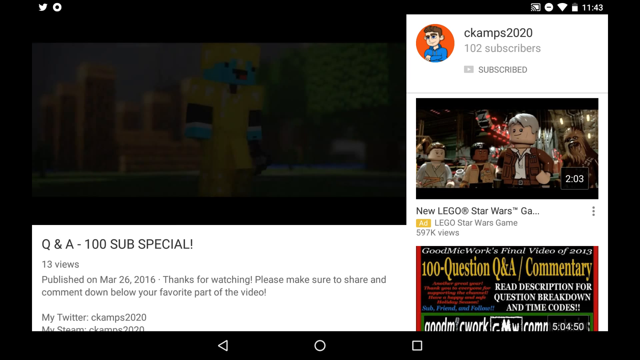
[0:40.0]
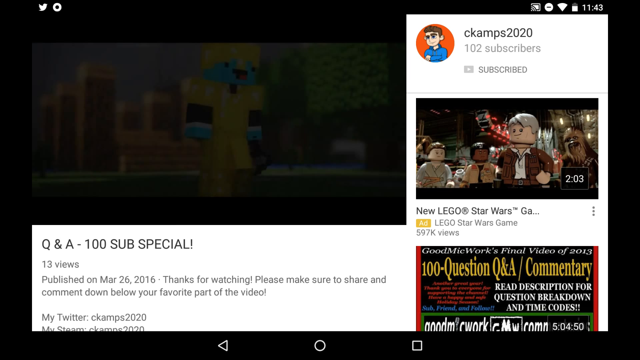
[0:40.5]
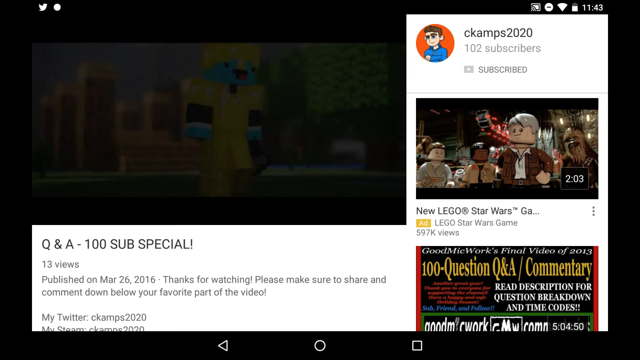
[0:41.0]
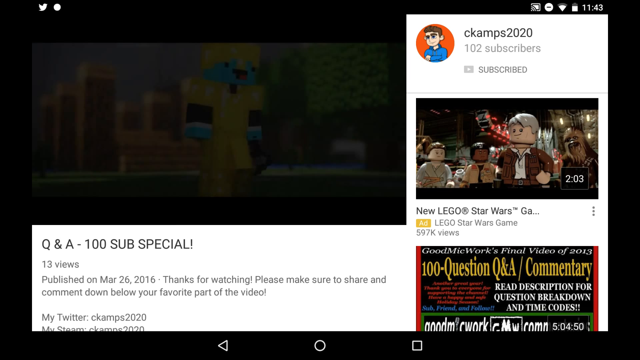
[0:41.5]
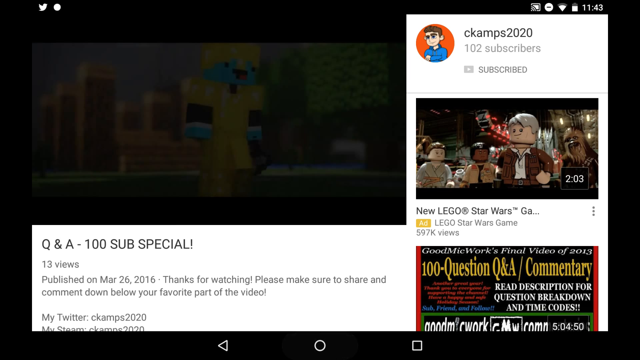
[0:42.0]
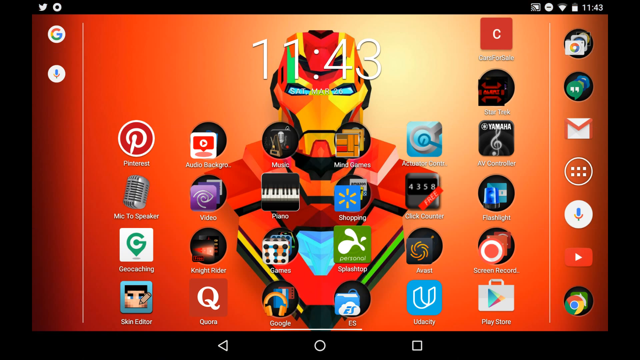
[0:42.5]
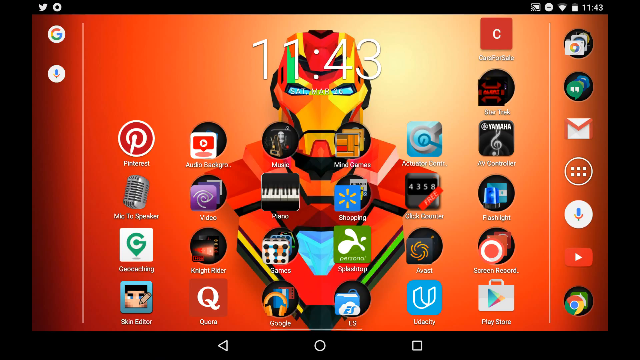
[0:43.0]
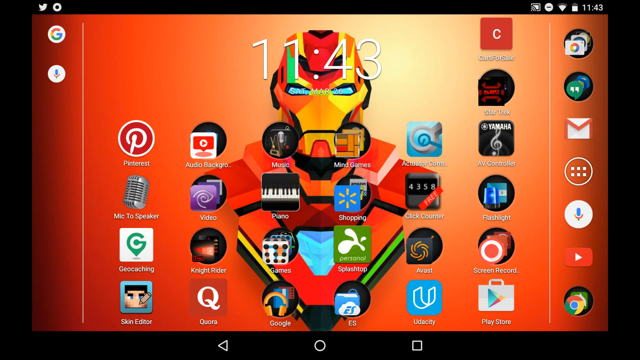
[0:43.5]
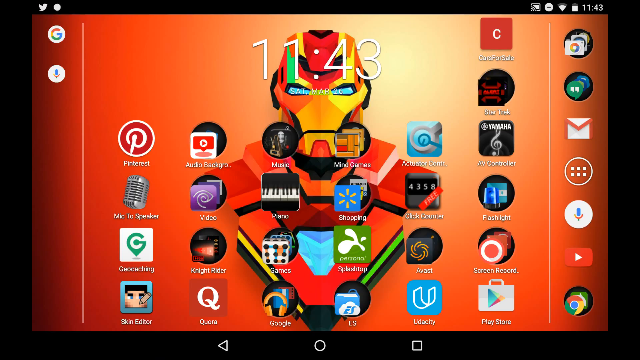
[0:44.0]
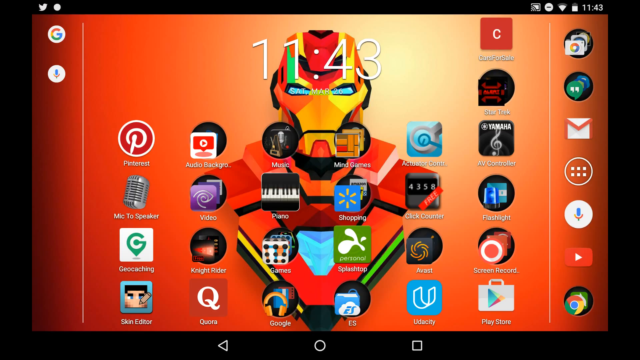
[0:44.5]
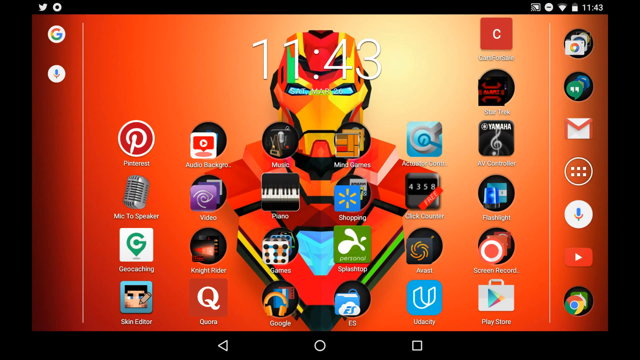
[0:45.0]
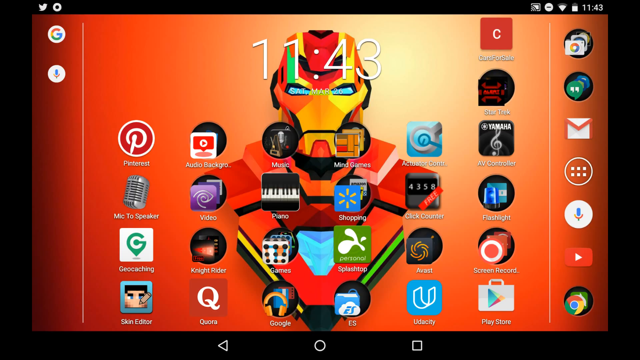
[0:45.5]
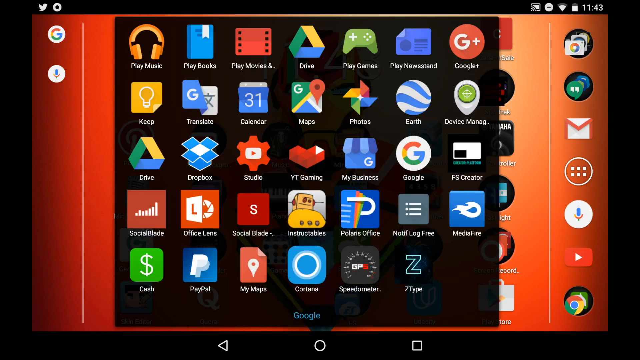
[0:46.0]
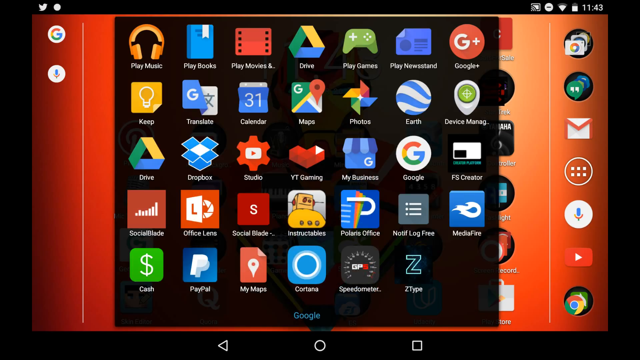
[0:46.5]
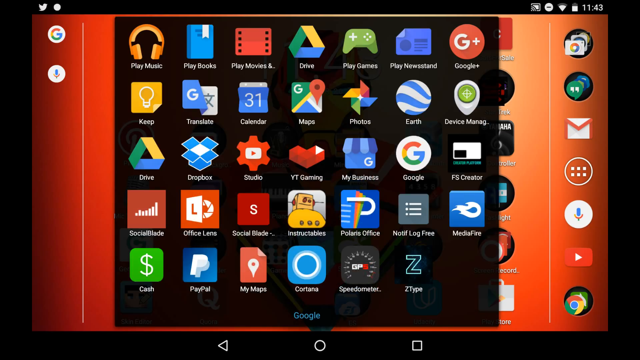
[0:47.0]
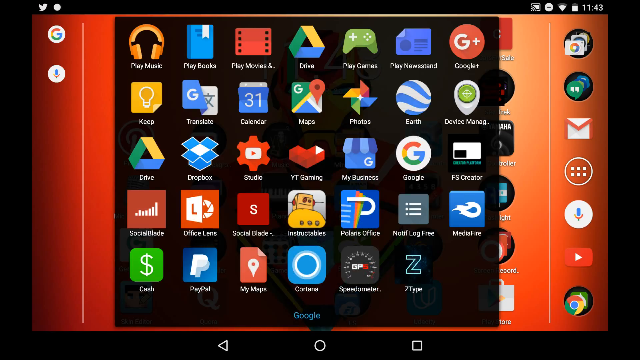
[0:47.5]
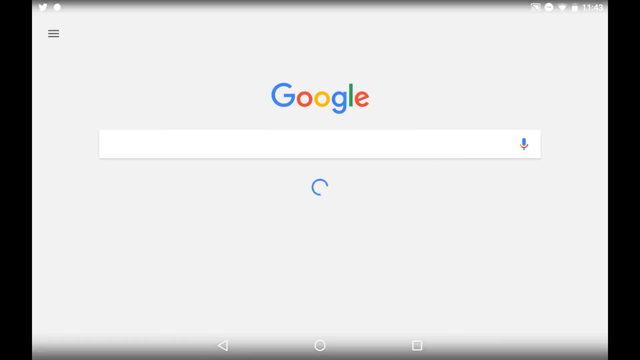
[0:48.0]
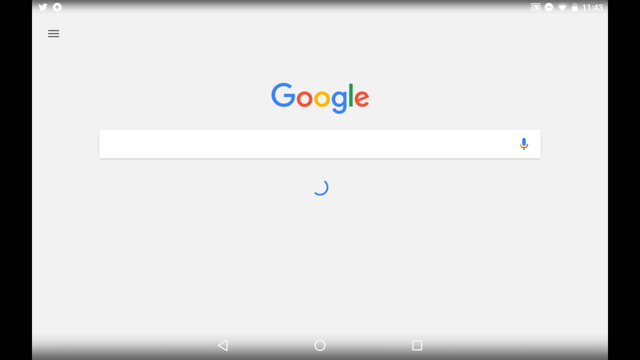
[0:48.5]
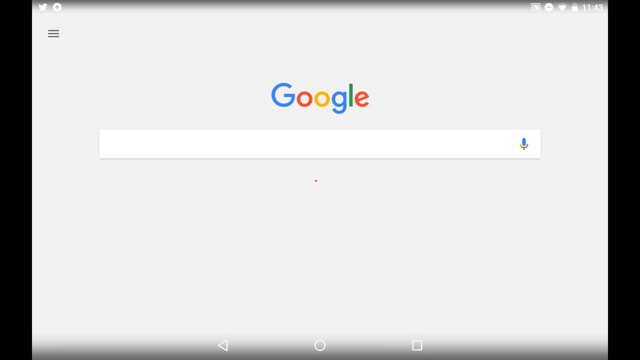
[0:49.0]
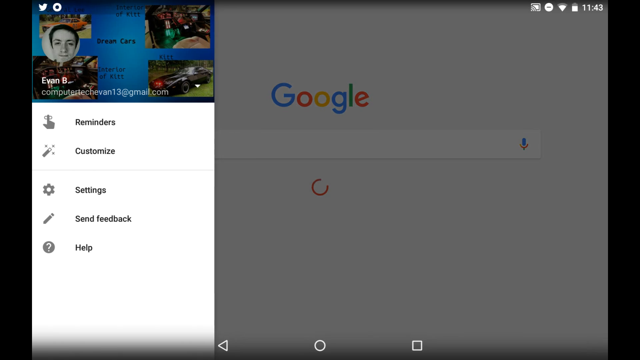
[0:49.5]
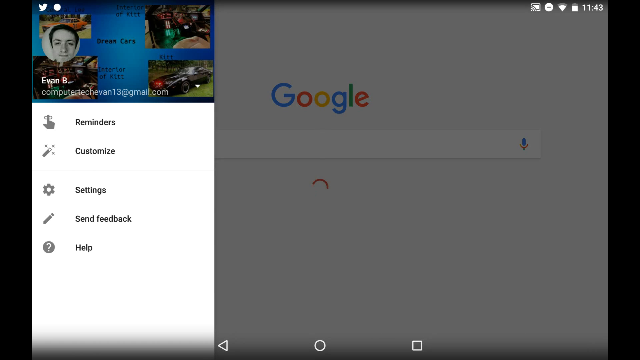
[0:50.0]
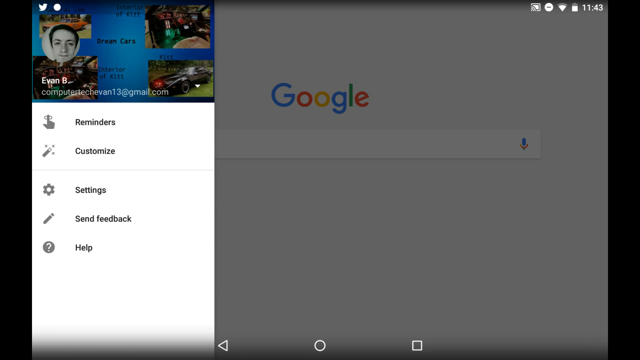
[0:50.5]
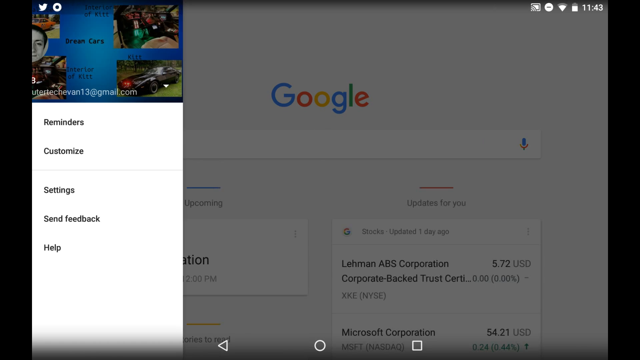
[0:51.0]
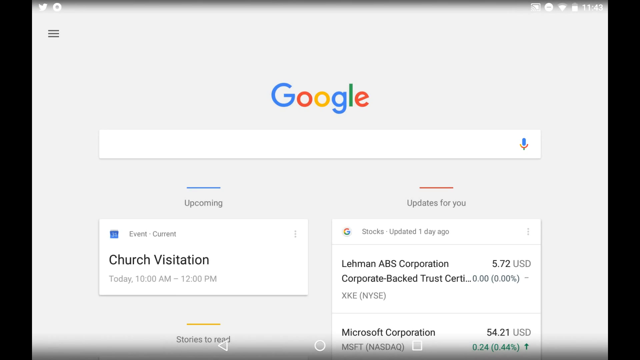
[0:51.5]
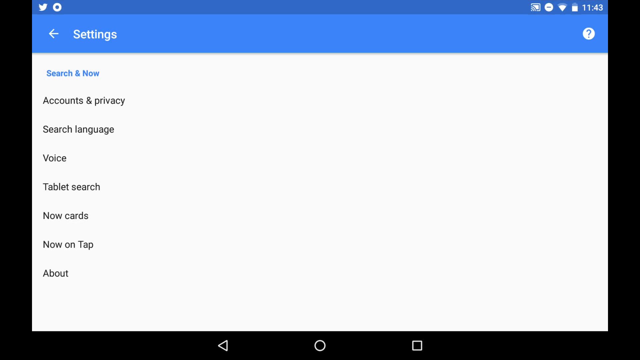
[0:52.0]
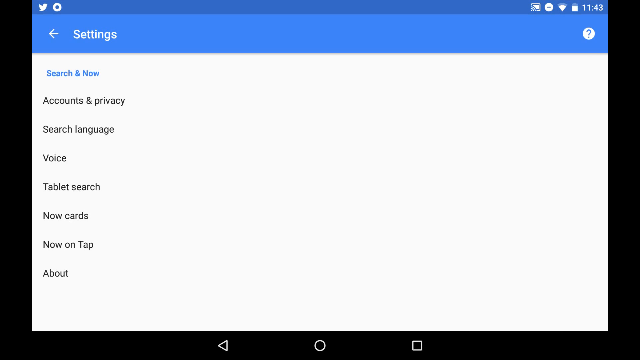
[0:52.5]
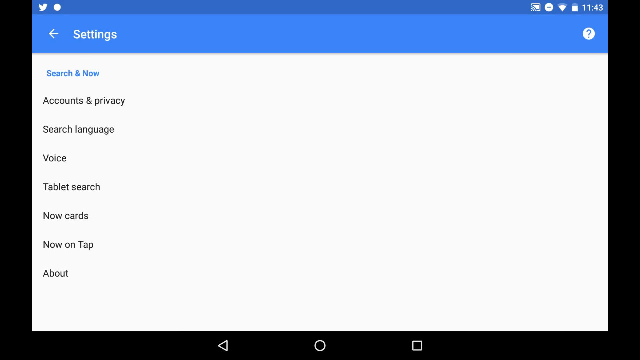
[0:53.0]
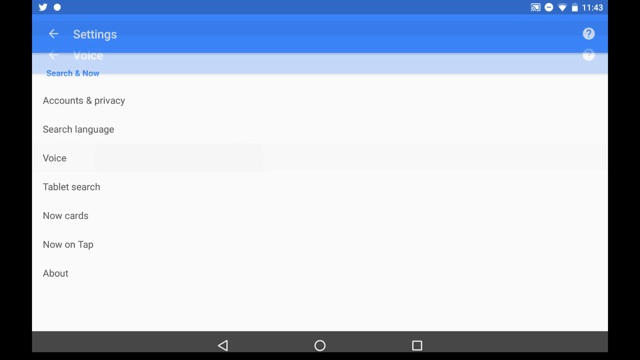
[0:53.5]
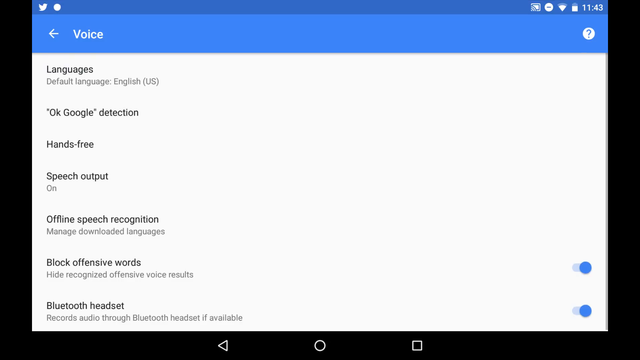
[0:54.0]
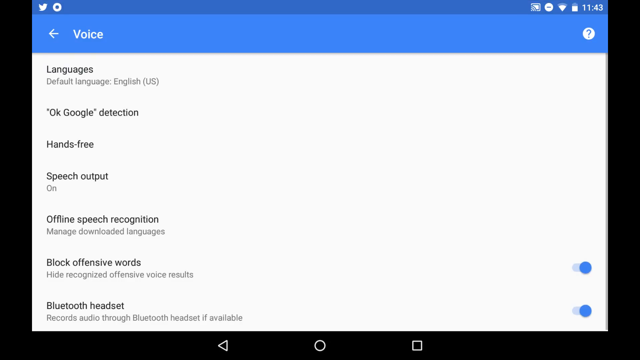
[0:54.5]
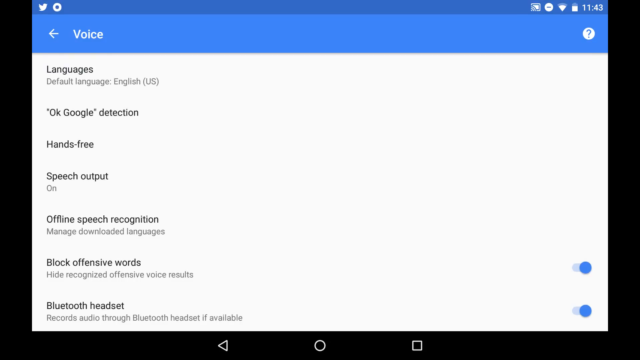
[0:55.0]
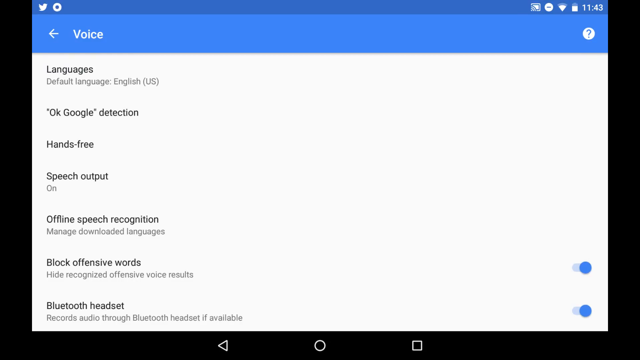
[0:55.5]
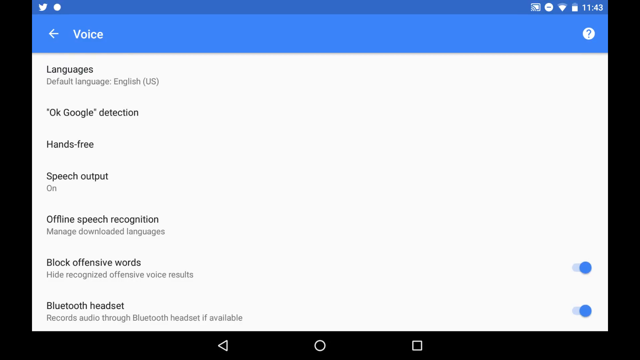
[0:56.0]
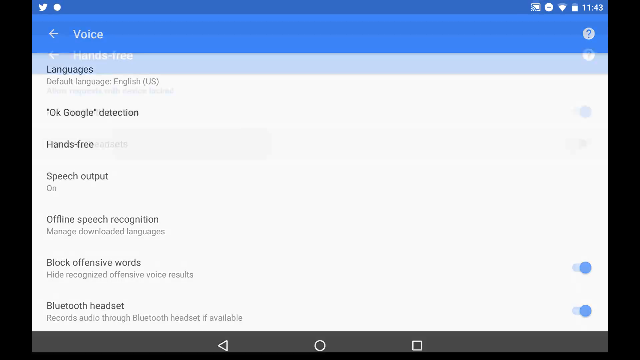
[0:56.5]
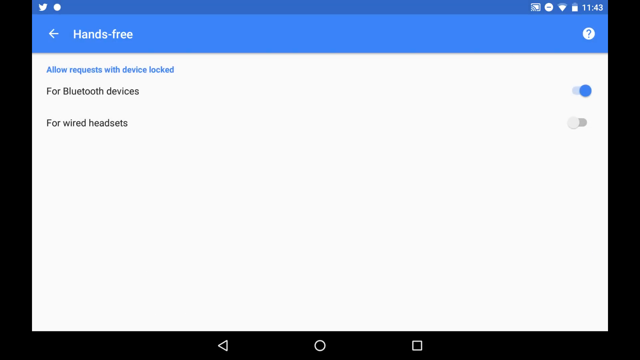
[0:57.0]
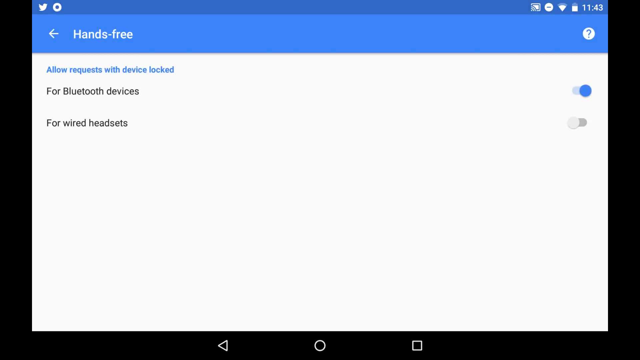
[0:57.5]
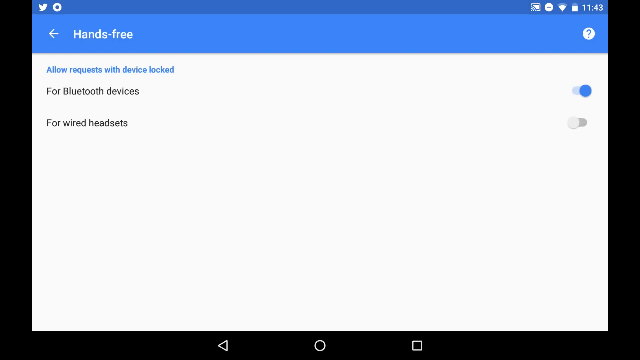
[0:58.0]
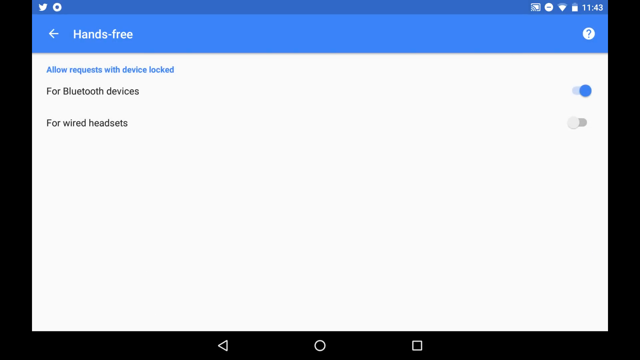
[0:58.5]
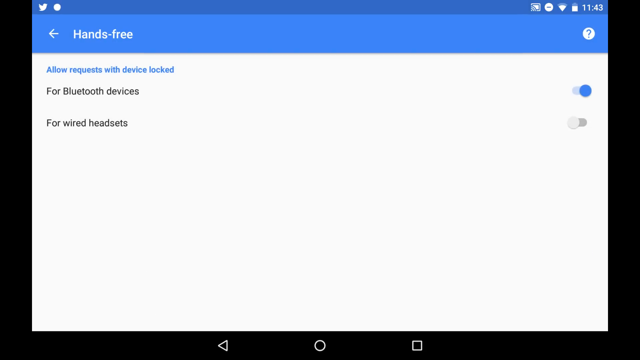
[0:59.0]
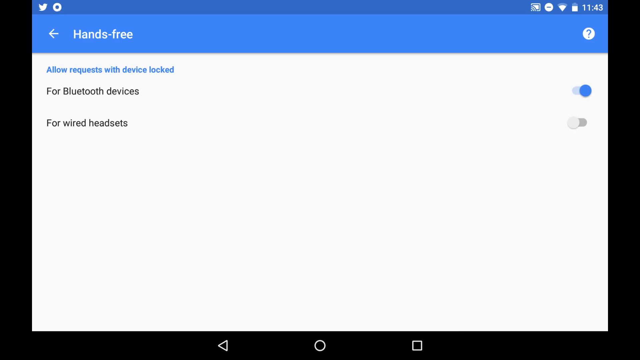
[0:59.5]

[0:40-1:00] A screen says "Q&A 100 subs special", with 13 views, published on March 26th, 2016, and the text "Thanks for watching. Please make sure to share and comment down below your favorite part of the video." It lists "my Twitter, Seacamps2020" and "my Steam Seacamps2020". Text on the right side says Seacamps2020, 102 subscribers, with the subscribe button enabled. An ad for new Lego Star Wars has 597K views and is two minutes, three seconds long, and another video below it is a "100 question Q&A commentary". A little video clip in the top left corner shows a yellow and blue Minecraft character. The user closes out of it and returns to the main tablet screen with a red Iron Man background and the time 11:43. Icons include Pinterest, speaker, Geocaching, Skin Editor, audio, background, video, Knight Rider, forum, music, piano, games, Google, Mind Games, shopping, Splashtop, ES, click counter, Avast, Udacity, Cars for Sale, Star Trek, AV Controller, flashlight, screen recorder, and Play Store, with Messages, email, microphone, YouTube, and Google Chrome on the right. The user opens another page of icons labeled Play Music, Play Books, Play Movies, Drive, Play Games, Play Newsstand, Google Plus, Keep, Translate, Calendar, Maps, Photos, Earth, Device Manager, FS, Creator, Google My Business, YT Gaming, Studio, Dropbox, Drive, Social Blade, Office Lens, Social Blade, Instructables, Polaris Office, notice, log free, Media Fire, pedometer, Cortana, My Maps, PayPal, and Cash. The user goes to a Google page and swipes to the left, showing "Evan B computer tech" and "Evan 13 at gmail.com", along with reminders, customize, settings, send feedback, and a help button. Text says "upcoming events" and "church visitation today, 10 AM to 12 PM", followed by updates for you for stocks. Then settings appears, with search and now, accounts and privacy, search language, voice, tablet search, now cards, now on tap, and about. Under voice, the settings include languages, default language English, Okay Google detection, hands-free, speech output on, offline speech recognition, manage downloaded languages, block offensive words (hide recognized offensive voice results, on), and Bluetooth headset (records audio through Bluetooth headset if available, on). The user clicks hands-free, where allow requests with device locked for Bluetooth devices is on while for wired headsets is off.